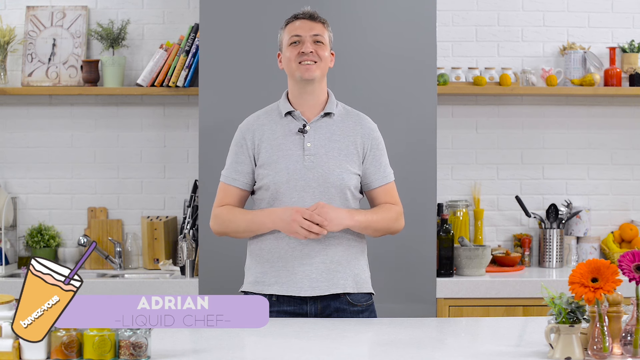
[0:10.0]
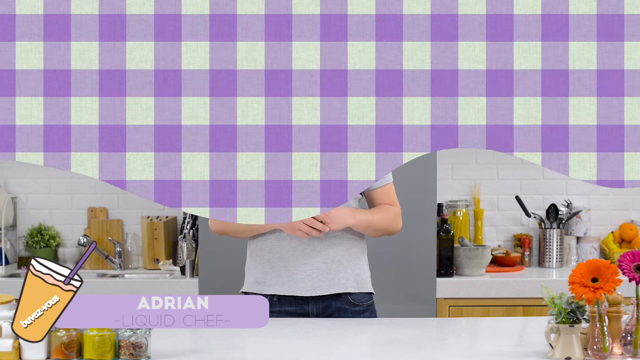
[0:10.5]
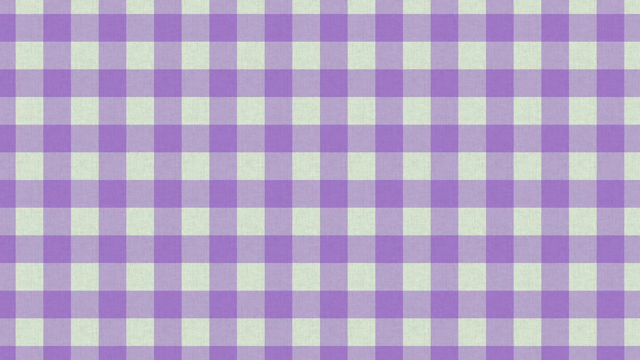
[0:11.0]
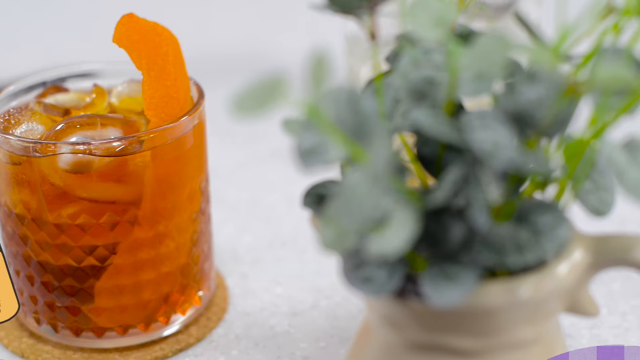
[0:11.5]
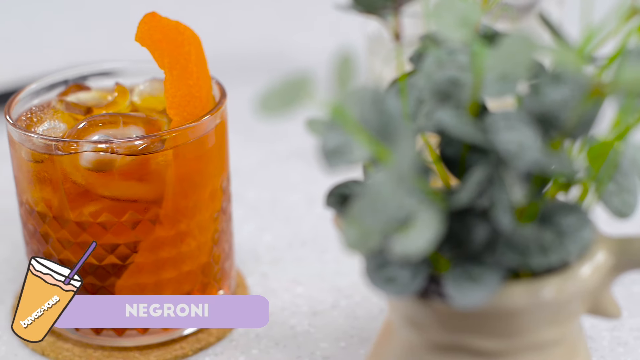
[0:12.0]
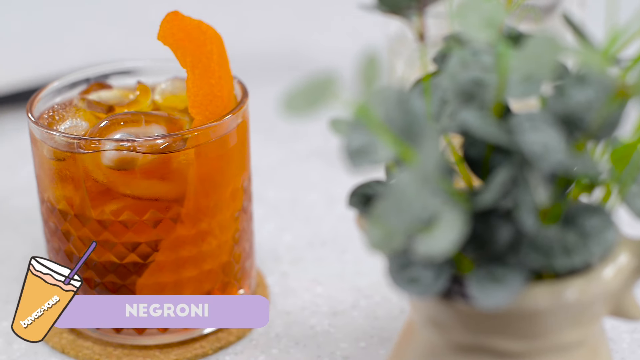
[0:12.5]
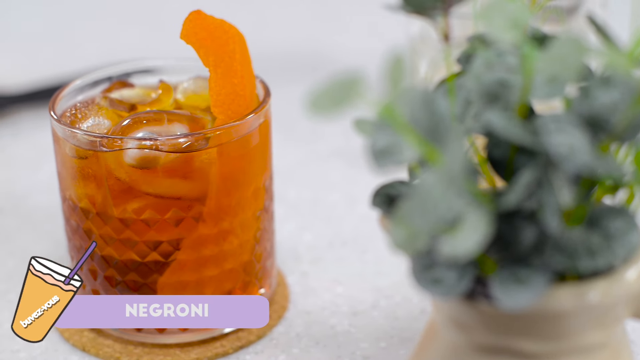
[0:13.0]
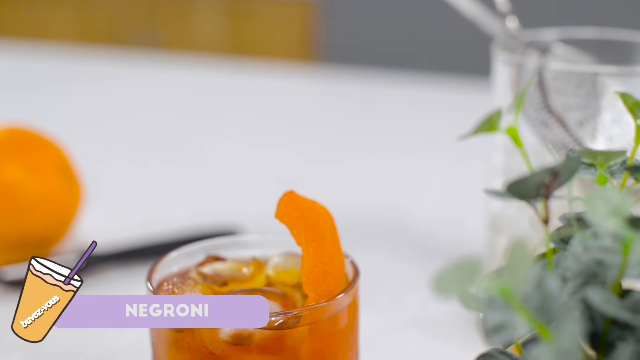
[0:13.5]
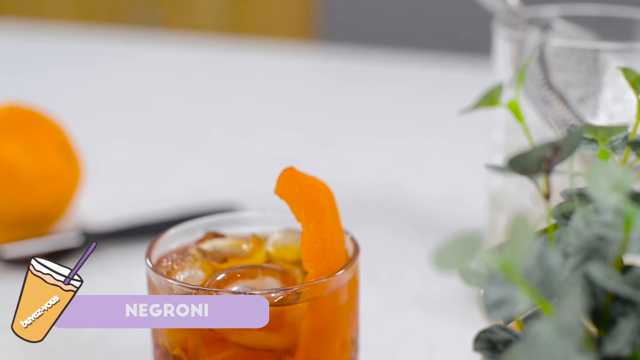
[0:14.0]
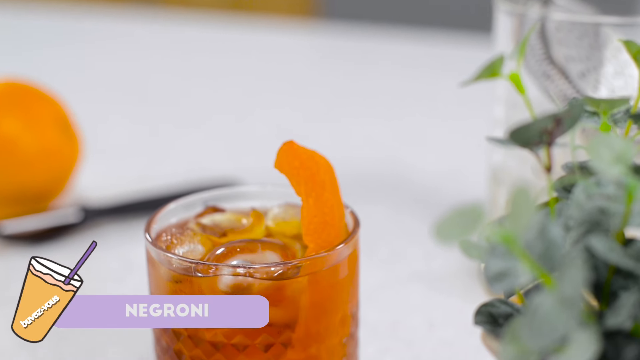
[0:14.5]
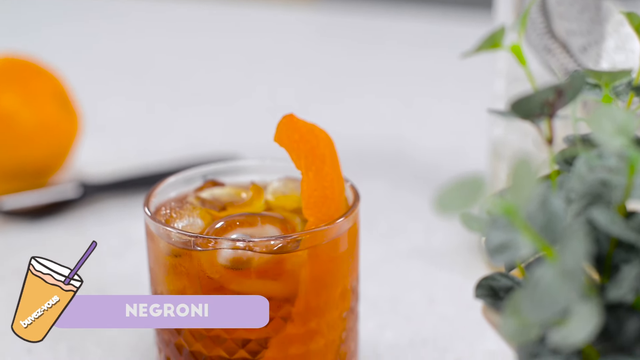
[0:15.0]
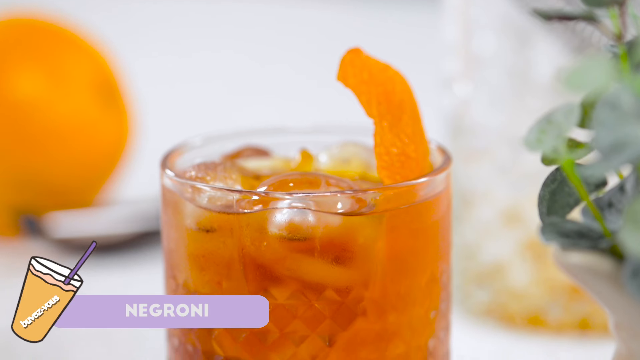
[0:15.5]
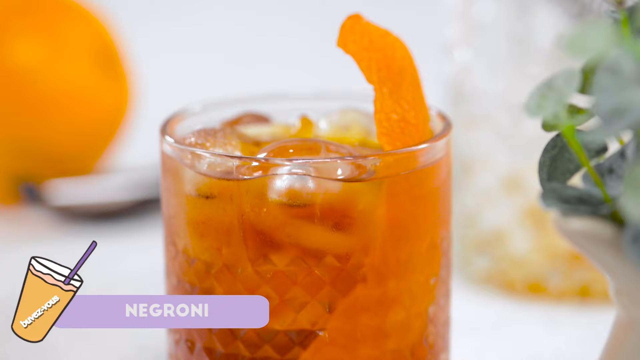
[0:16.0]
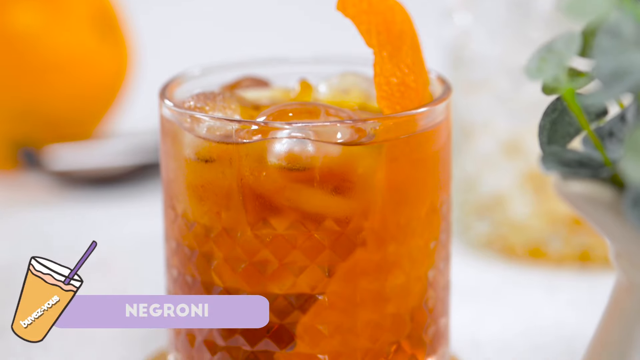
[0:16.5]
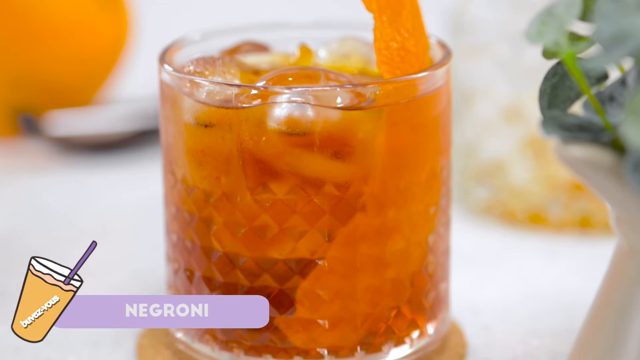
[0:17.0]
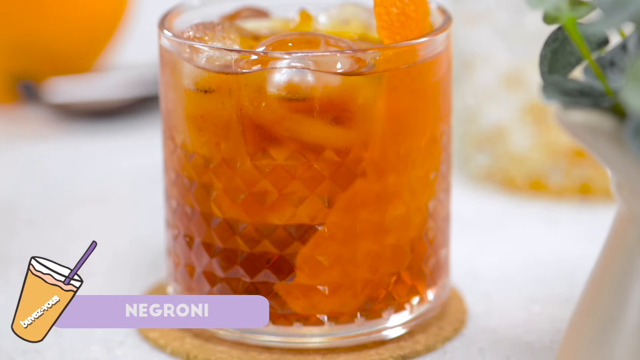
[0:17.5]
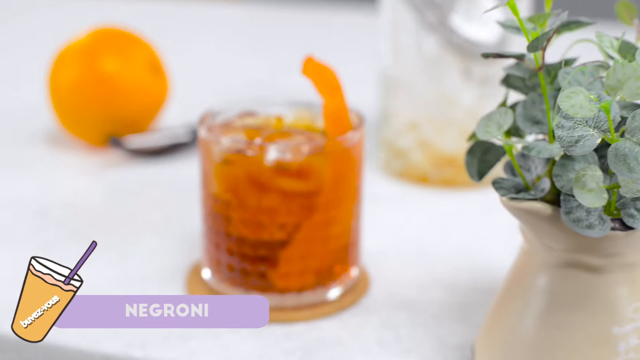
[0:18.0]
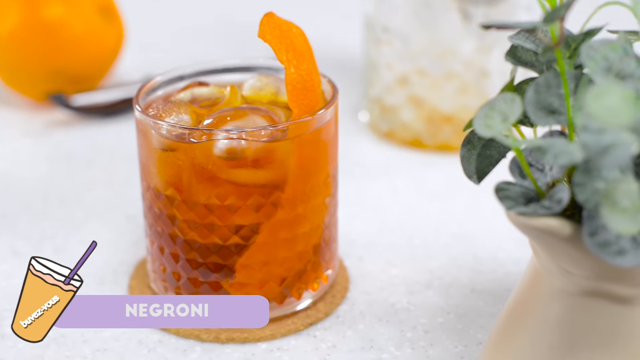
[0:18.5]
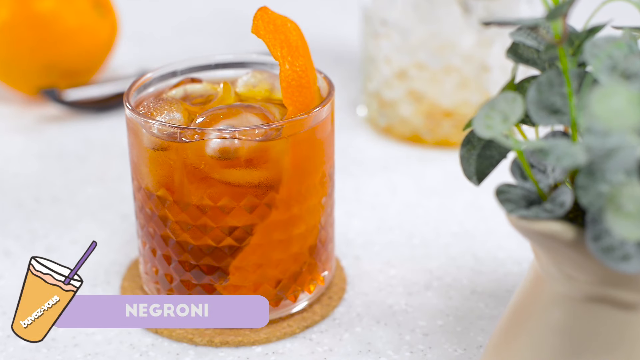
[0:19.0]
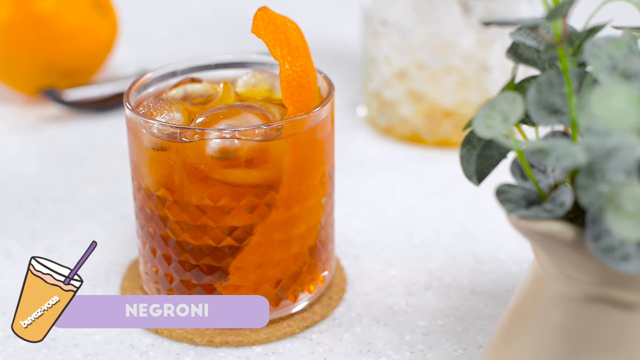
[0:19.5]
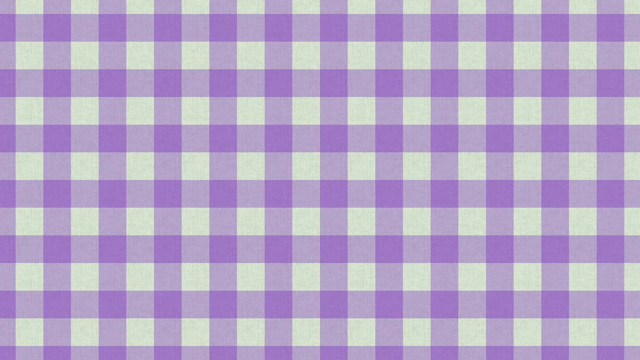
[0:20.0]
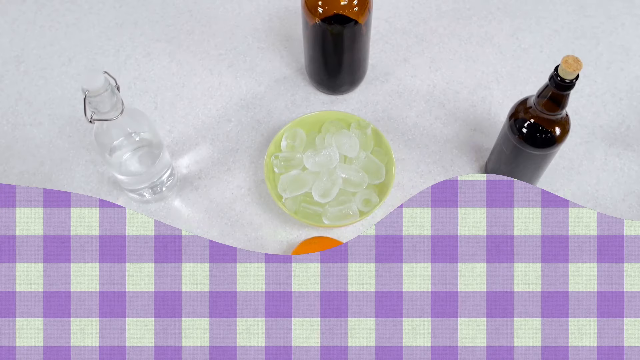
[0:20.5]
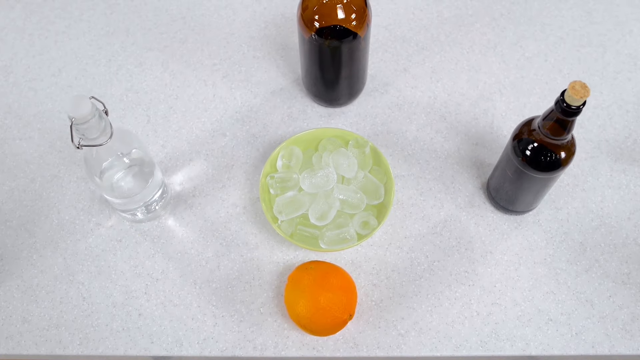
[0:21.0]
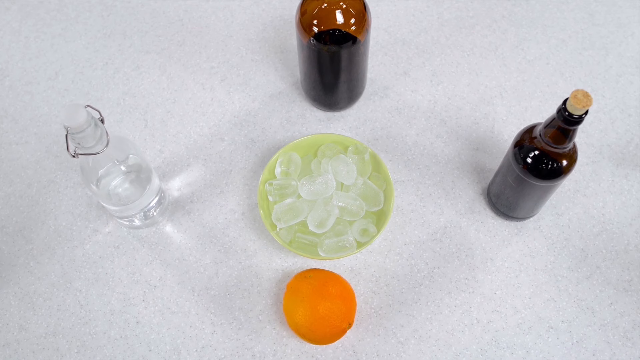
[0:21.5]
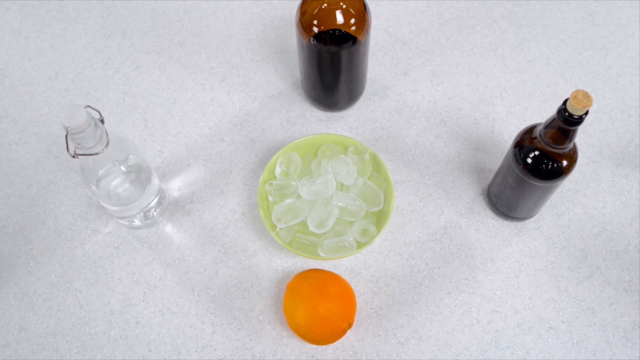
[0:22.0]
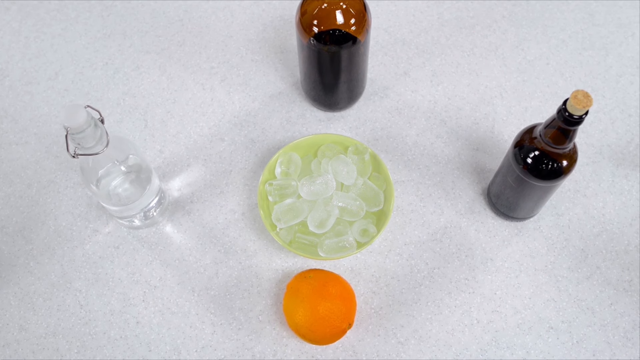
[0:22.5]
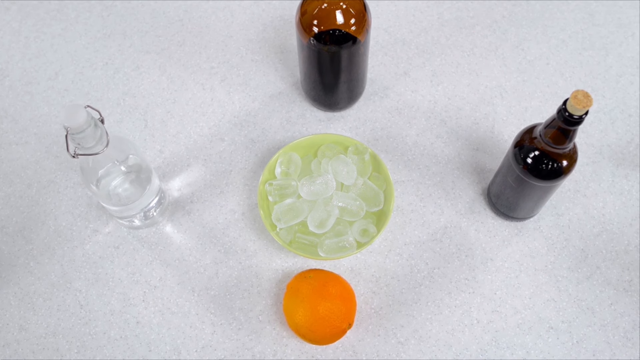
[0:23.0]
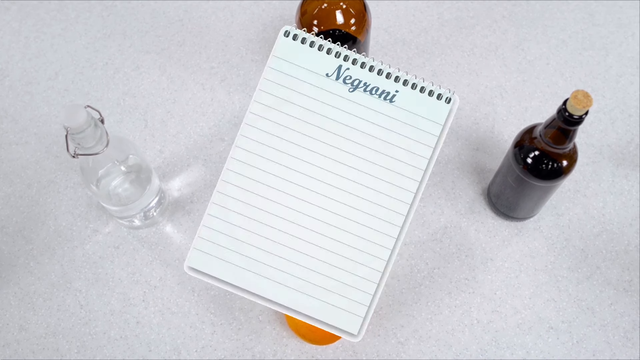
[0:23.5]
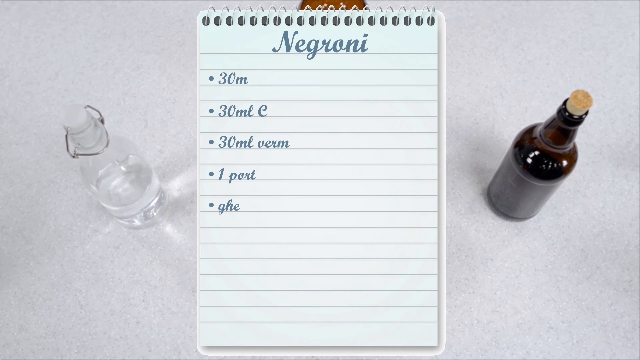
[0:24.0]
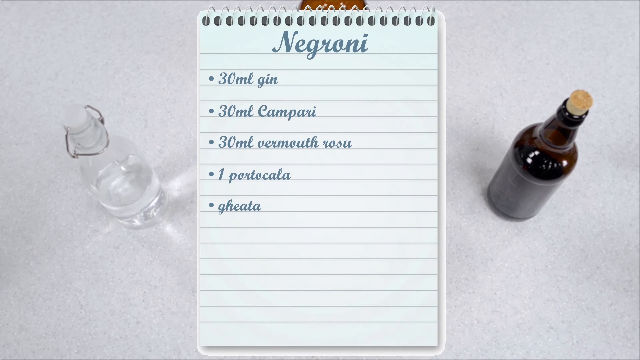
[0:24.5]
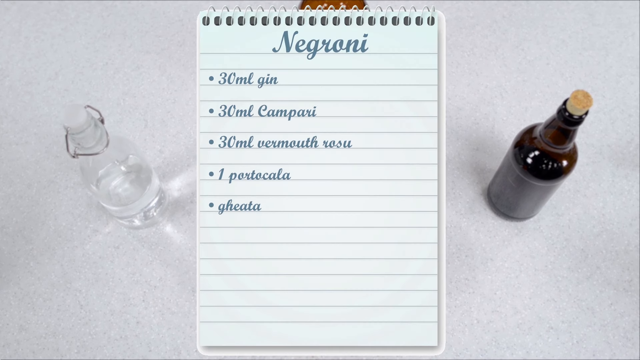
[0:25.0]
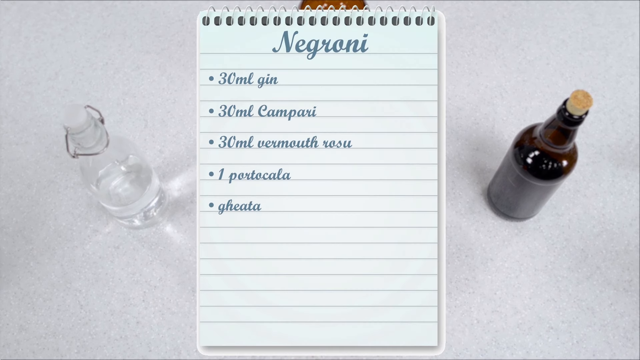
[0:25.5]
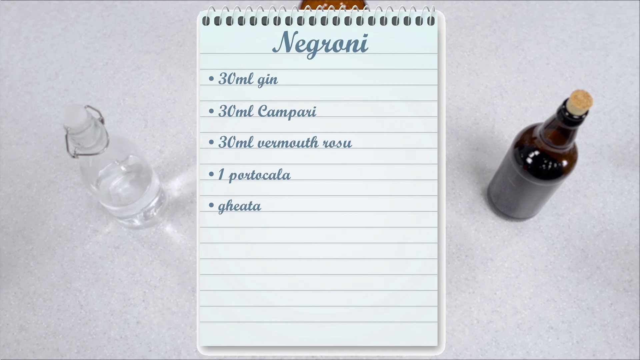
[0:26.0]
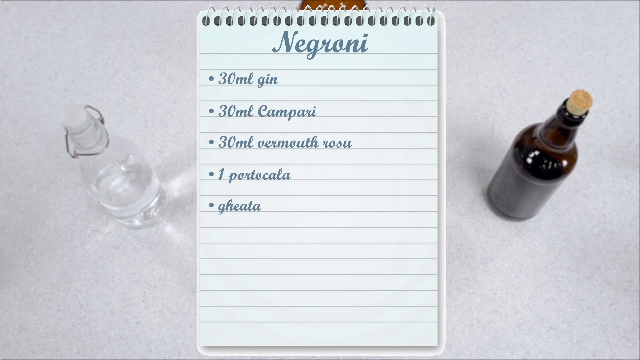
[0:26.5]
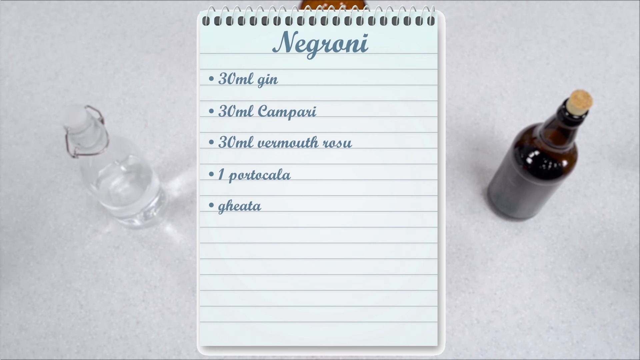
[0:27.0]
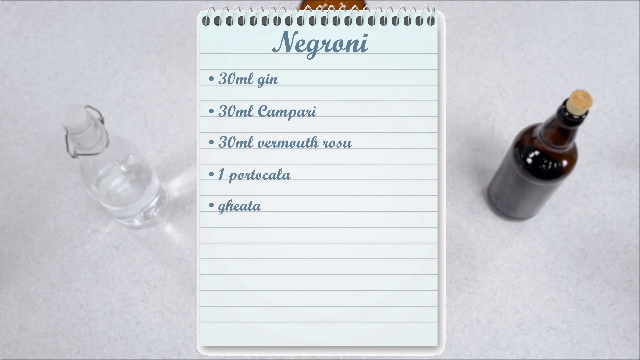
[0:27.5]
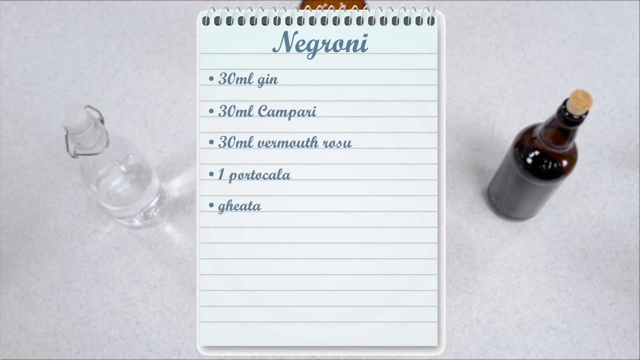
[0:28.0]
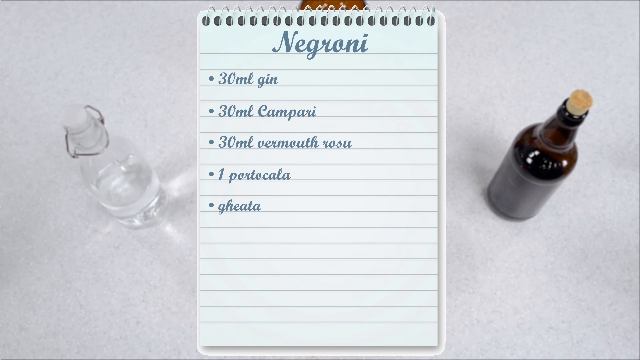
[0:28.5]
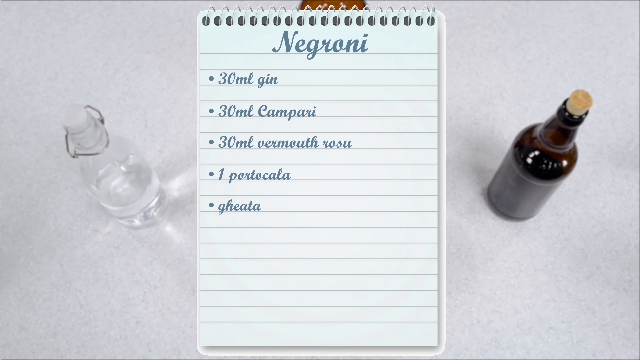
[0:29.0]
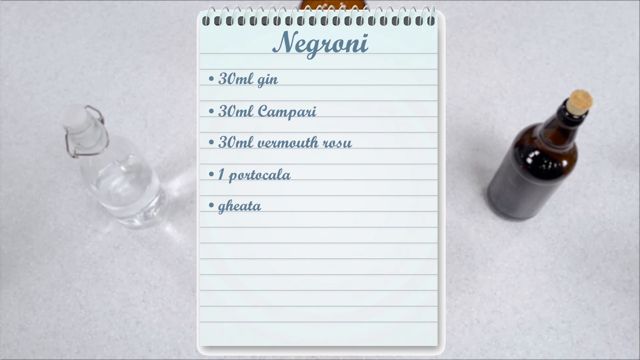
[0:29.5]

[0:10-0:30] A couple of different shots show a brownish mixed drink in a short glass, with some ice cubes in it and what looks like a slice of orange on the side. Around it there are maybe some herbs, and what looks like an orange is in the background, a little blurry. The image then cuts to what apparently are the drink's ingredients: three bottles and an orange below, surrounding a green plate of ice cubes. The bottle furthest left is probably simple syrup, next is an unidentified item in a brown bottle, then a smaller bottle with what looks like a cork on top, and at the bottom is an orange. This is all on a gray countertop. The camera kind of zooms in over this, and then an animated spiral-bound notebook, bound at the top, appears. At the top it says "Negroni," and beneath that "30 ml gin, 30 ml Comparis, 30 ml vermouth, i portocala, and gheata."